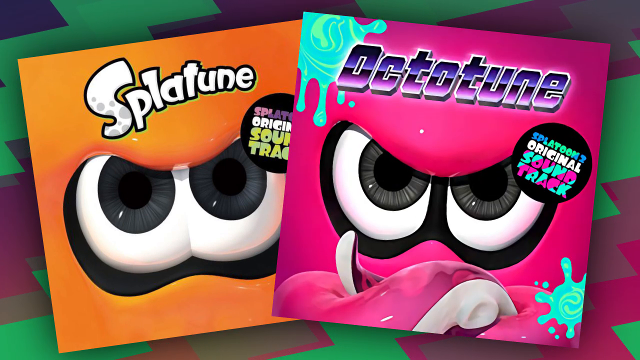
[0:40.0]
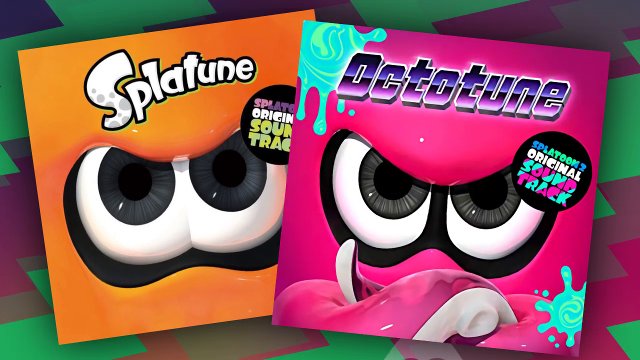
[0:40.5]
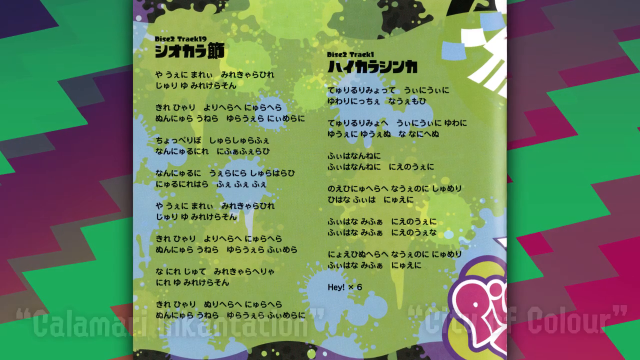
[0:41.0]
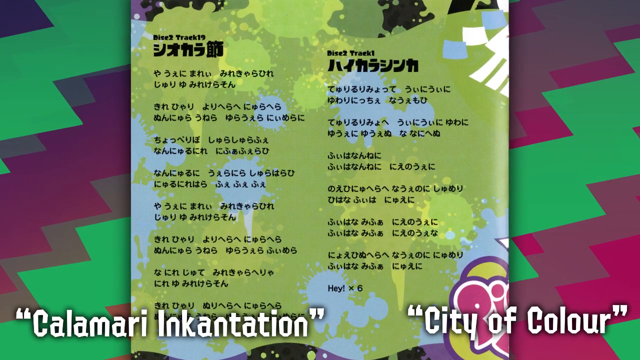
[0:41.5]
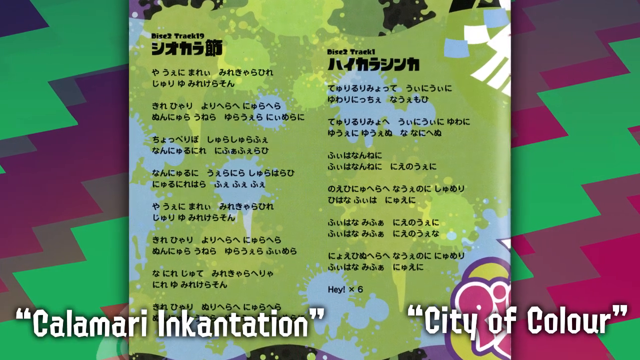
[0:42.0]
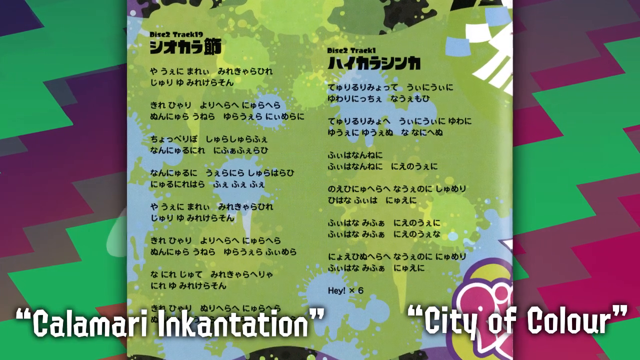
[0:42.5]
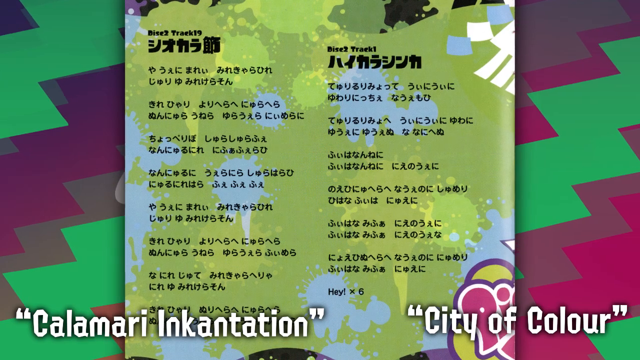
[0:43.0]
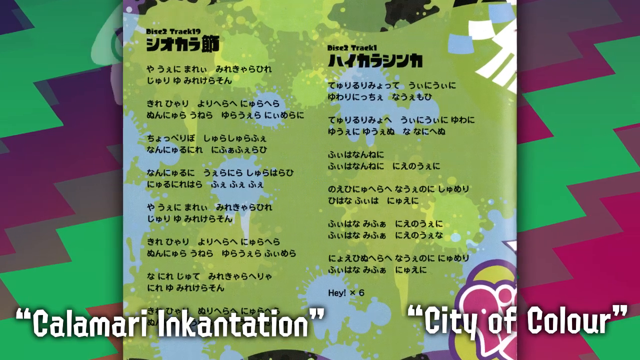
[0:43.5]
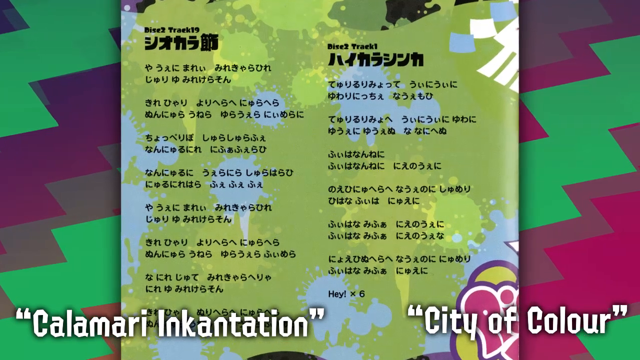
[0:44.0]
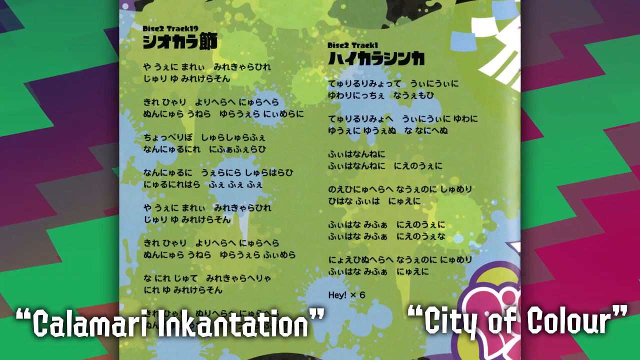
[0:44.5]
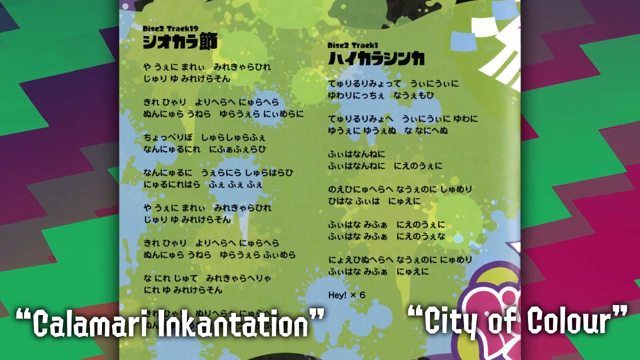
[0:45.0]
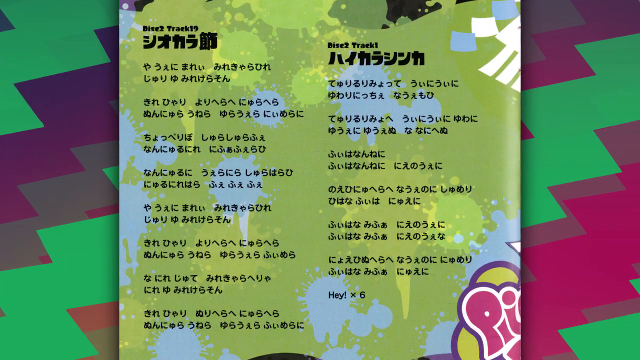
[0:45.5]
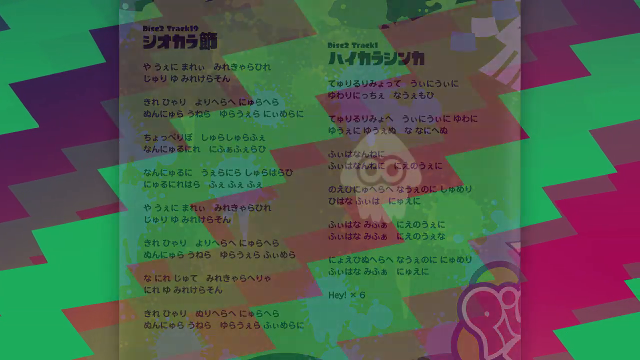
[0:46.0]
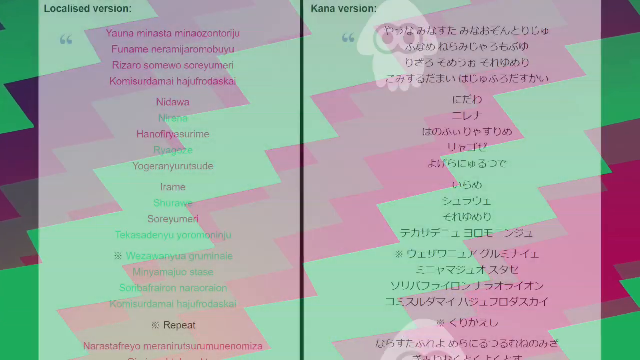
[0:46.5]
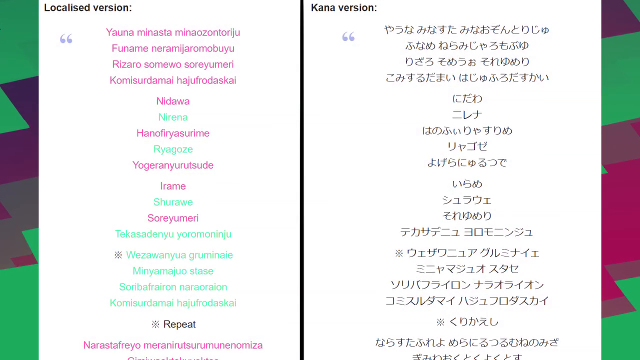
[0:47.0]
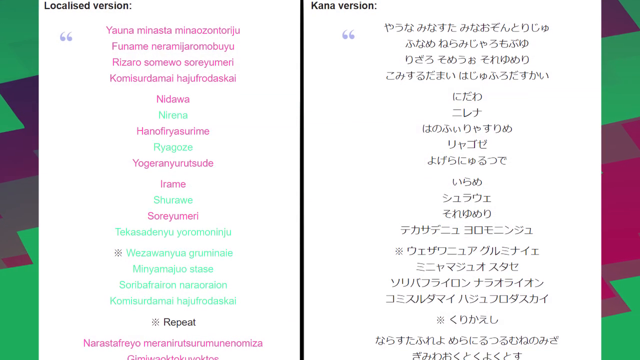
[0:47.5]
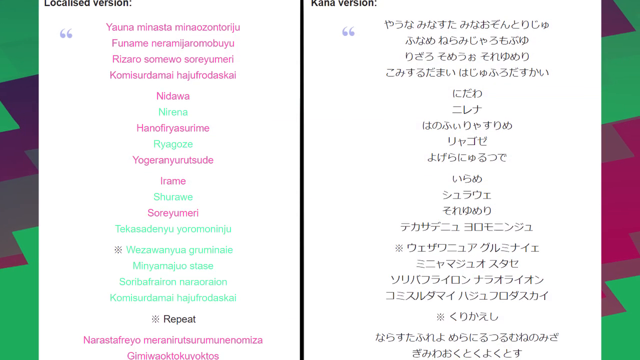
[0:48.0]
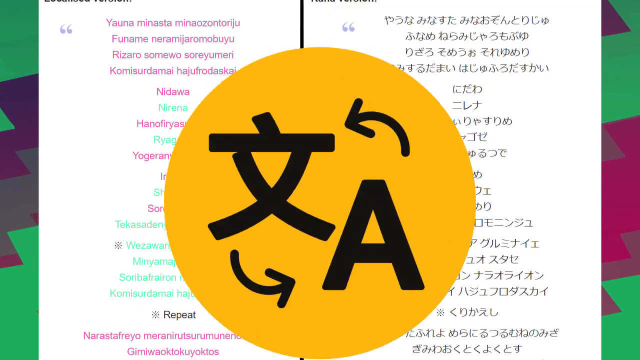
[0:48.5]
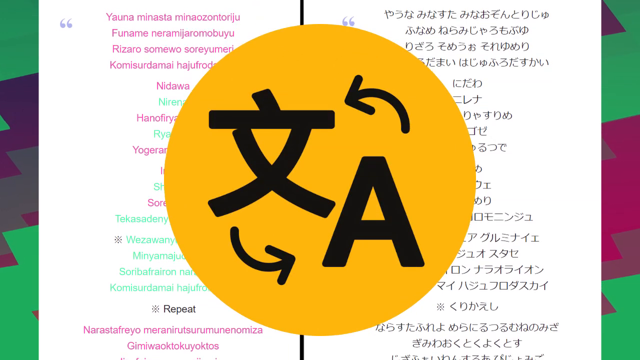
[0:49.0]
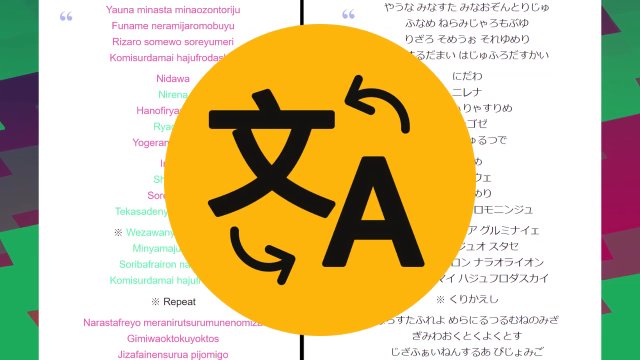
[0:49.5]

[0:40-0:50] Text written in Japanese appears, apparently in tweets. The subject seems to possibly be some candy or something similar.